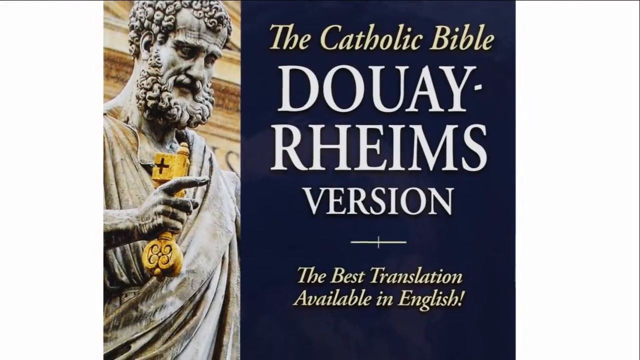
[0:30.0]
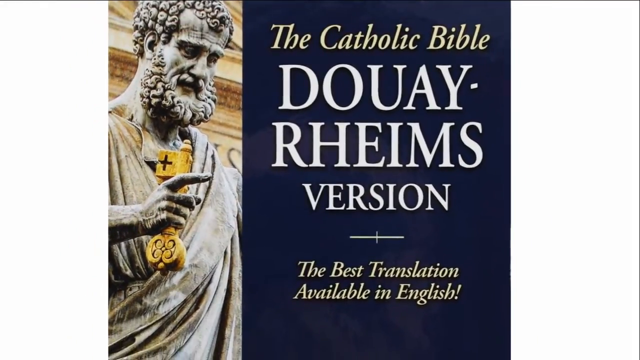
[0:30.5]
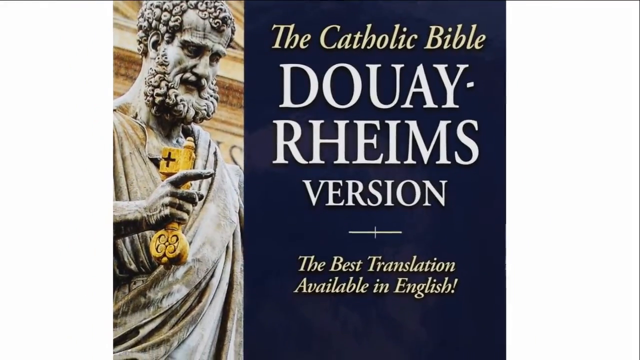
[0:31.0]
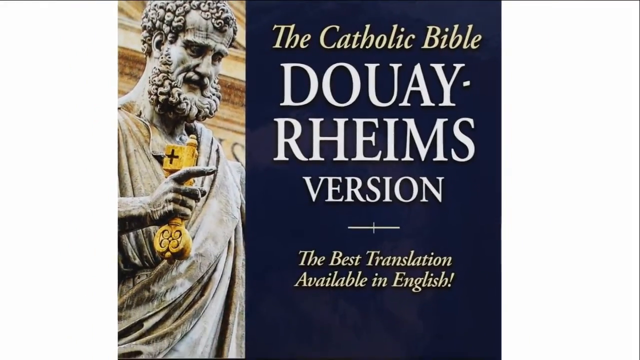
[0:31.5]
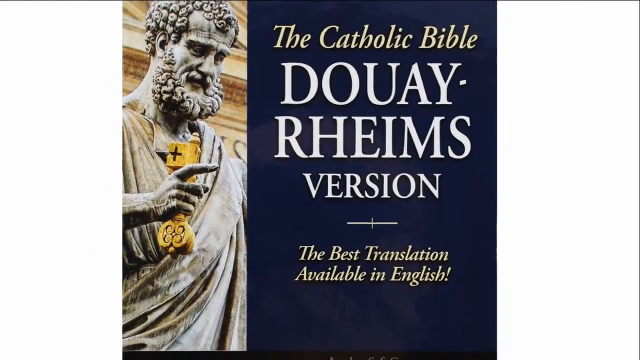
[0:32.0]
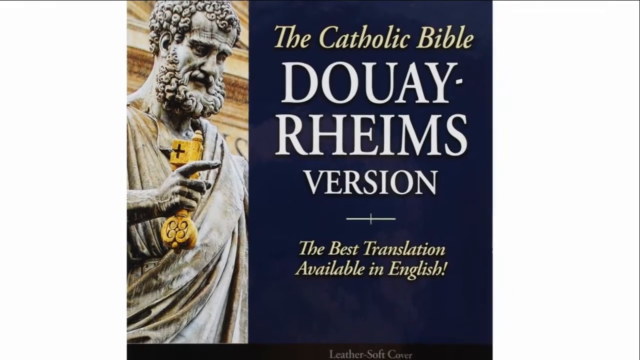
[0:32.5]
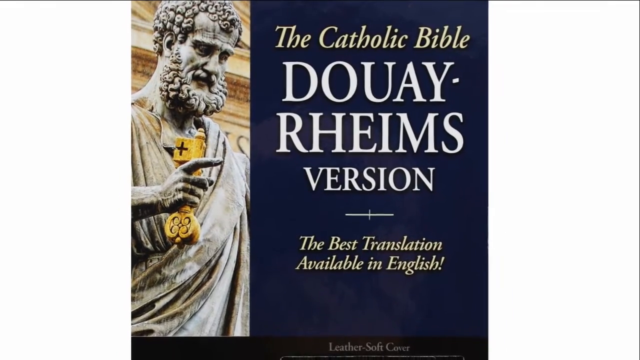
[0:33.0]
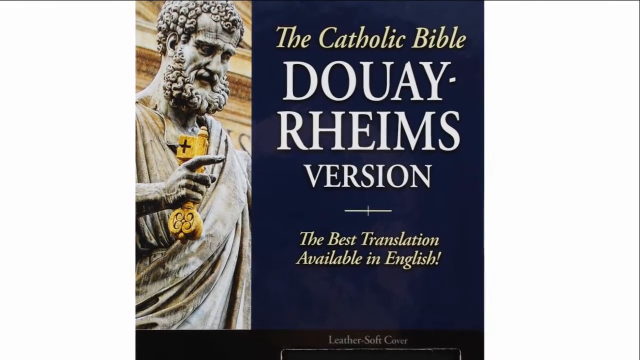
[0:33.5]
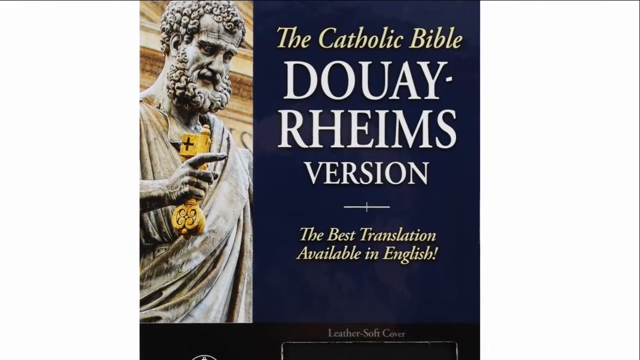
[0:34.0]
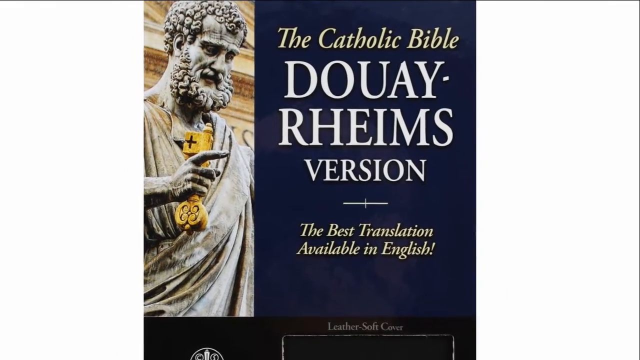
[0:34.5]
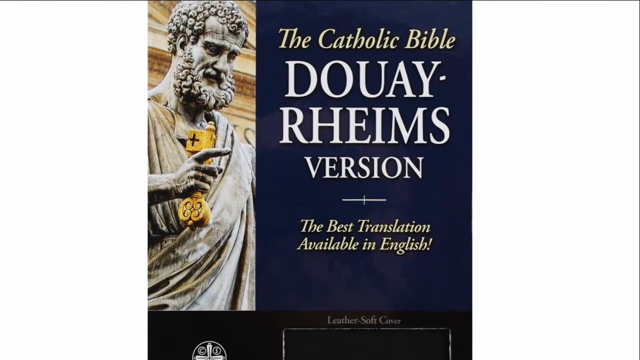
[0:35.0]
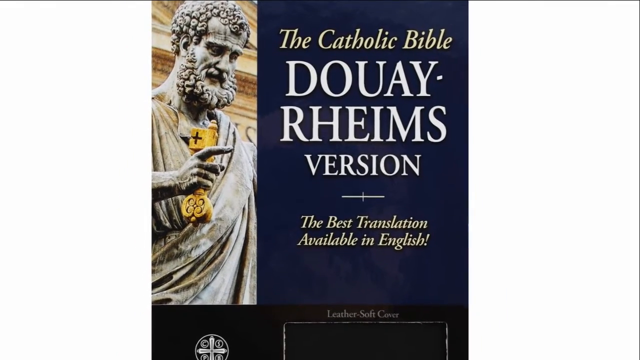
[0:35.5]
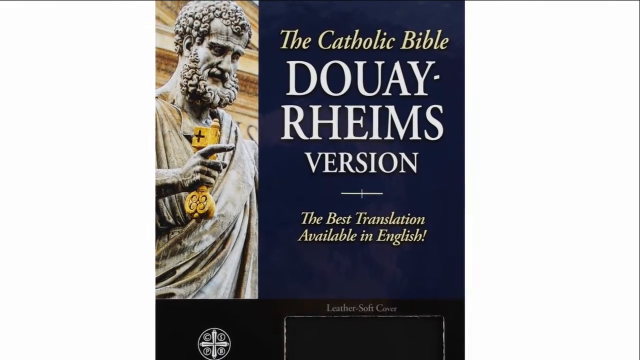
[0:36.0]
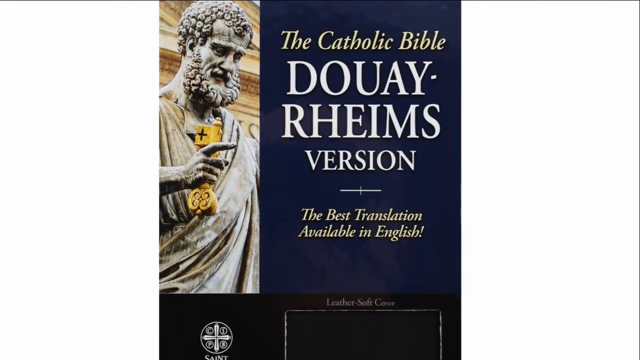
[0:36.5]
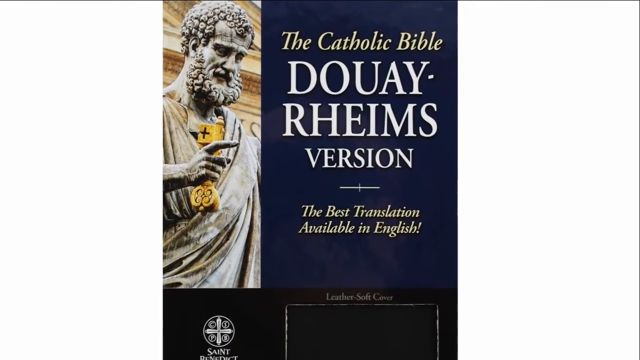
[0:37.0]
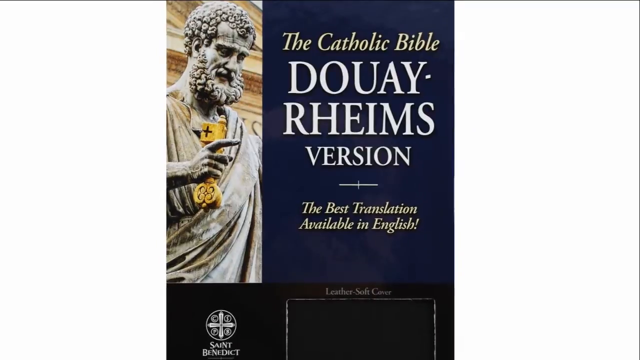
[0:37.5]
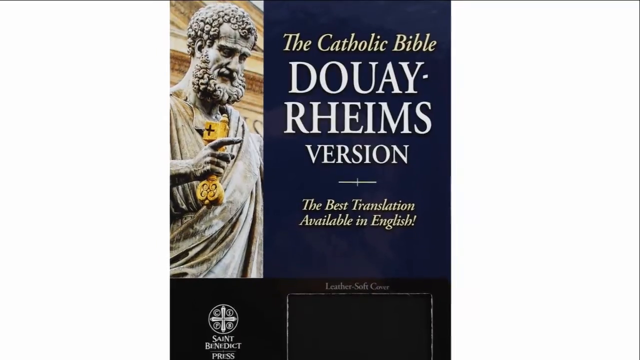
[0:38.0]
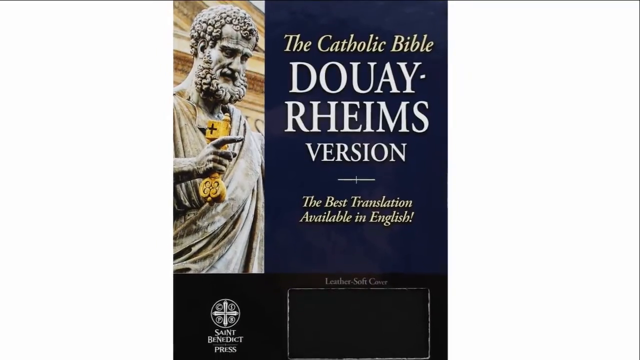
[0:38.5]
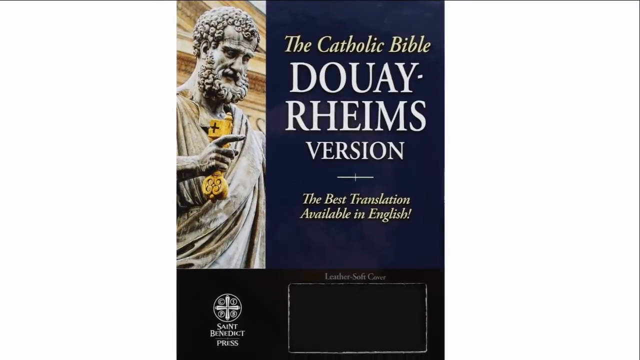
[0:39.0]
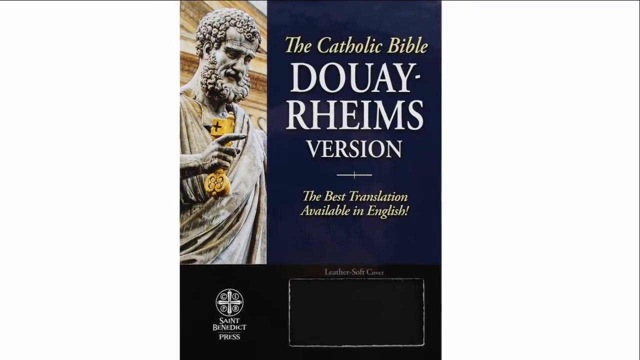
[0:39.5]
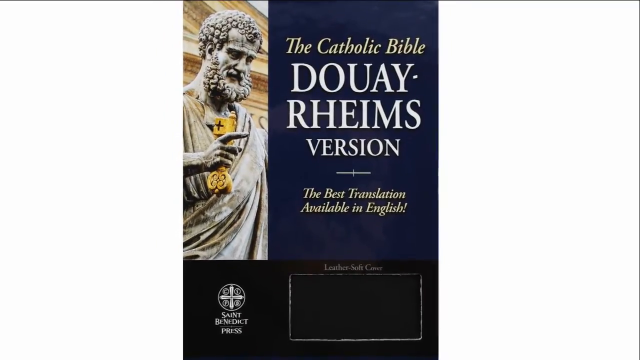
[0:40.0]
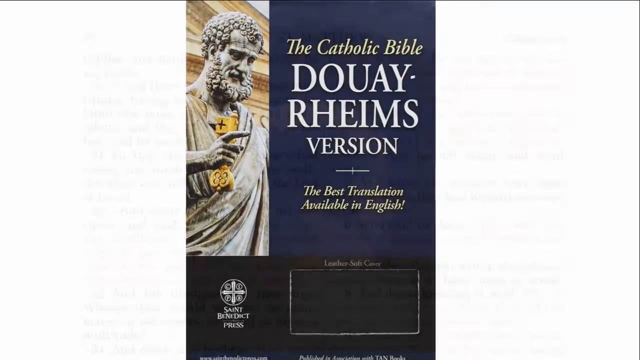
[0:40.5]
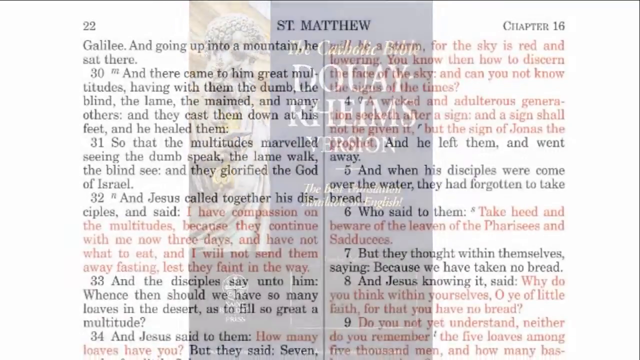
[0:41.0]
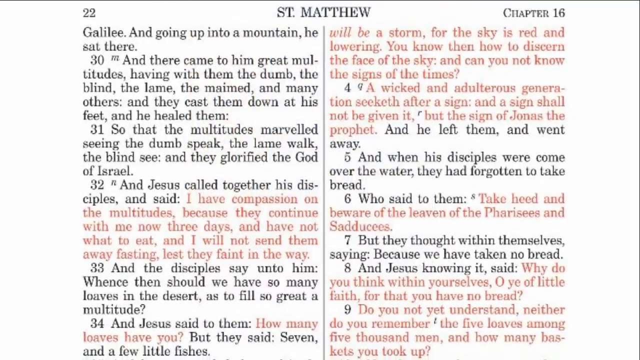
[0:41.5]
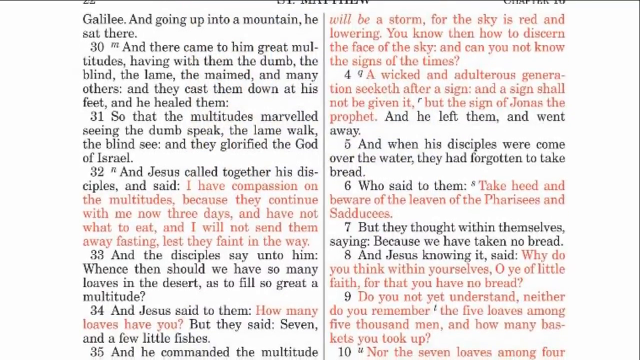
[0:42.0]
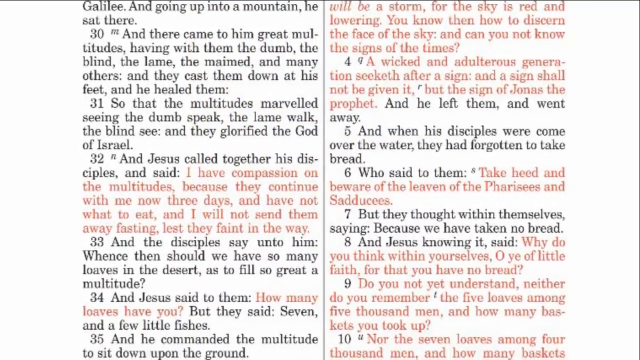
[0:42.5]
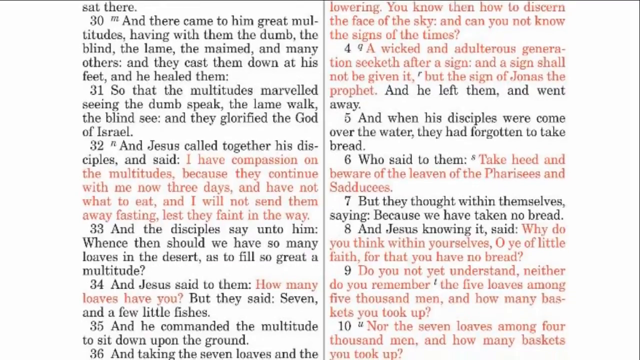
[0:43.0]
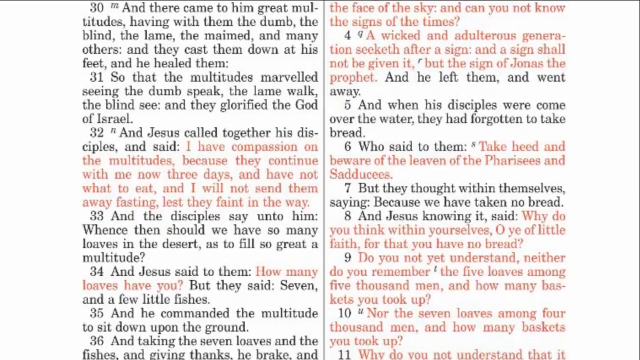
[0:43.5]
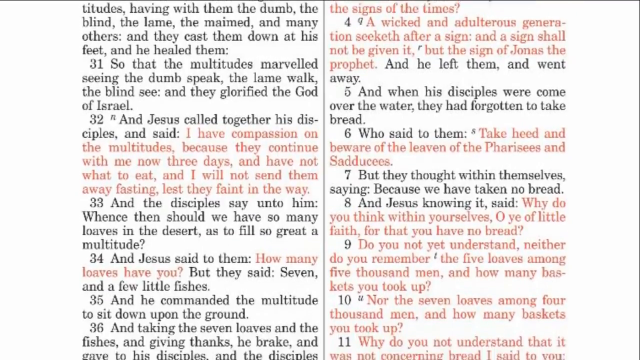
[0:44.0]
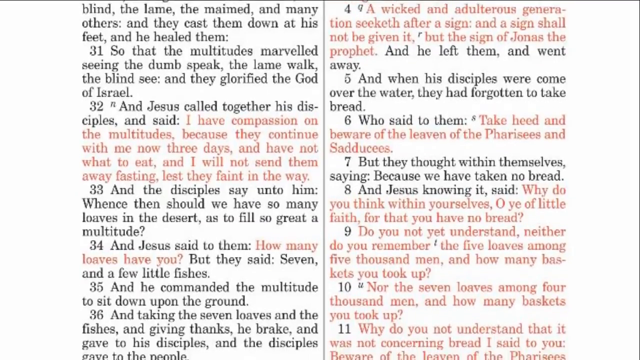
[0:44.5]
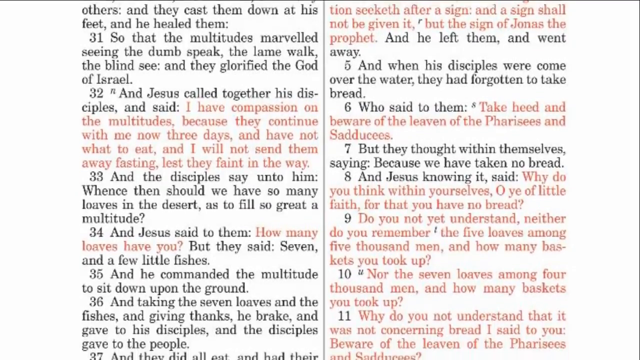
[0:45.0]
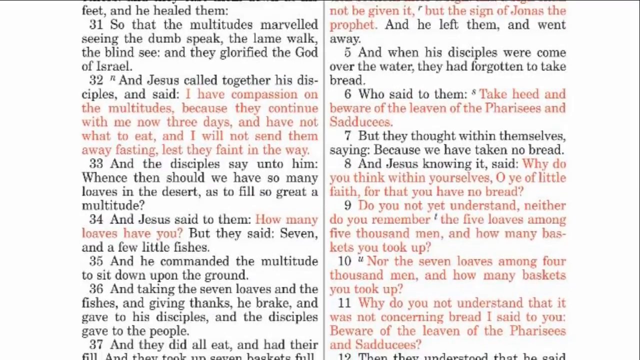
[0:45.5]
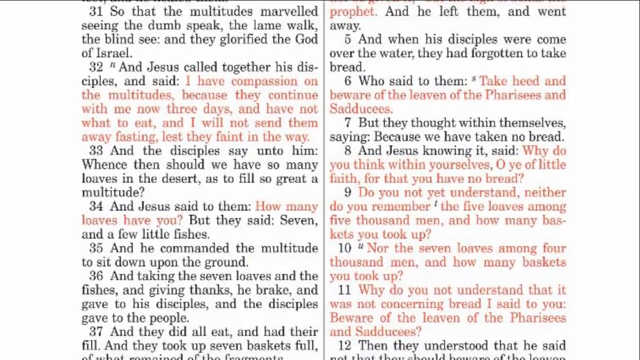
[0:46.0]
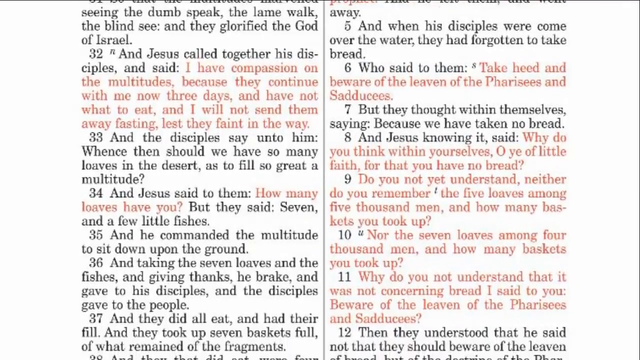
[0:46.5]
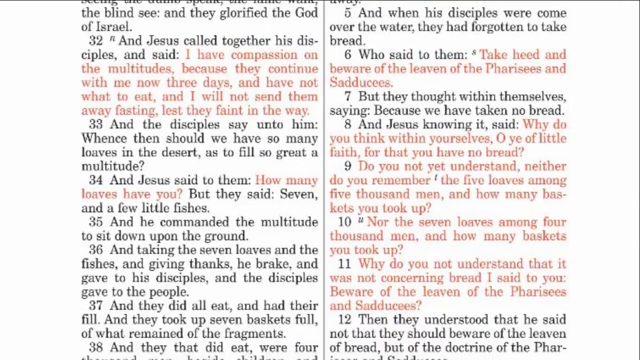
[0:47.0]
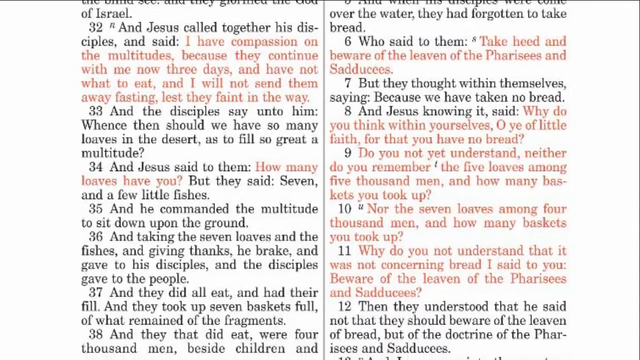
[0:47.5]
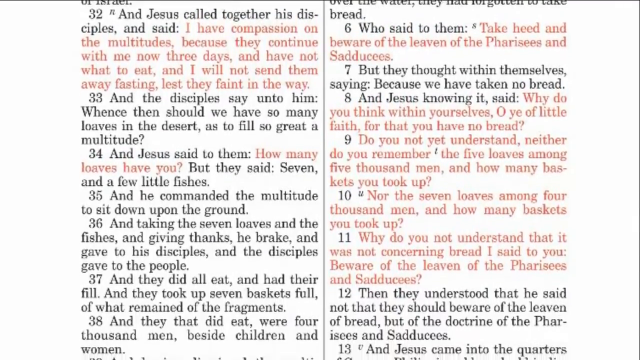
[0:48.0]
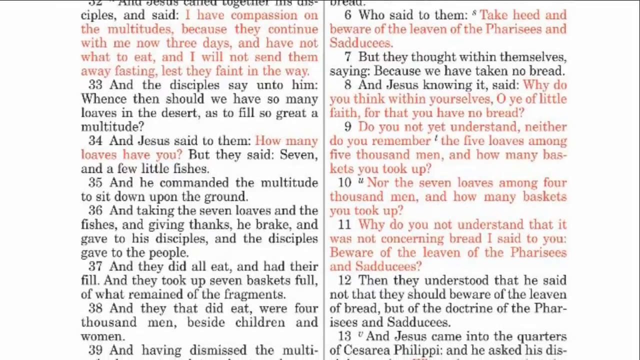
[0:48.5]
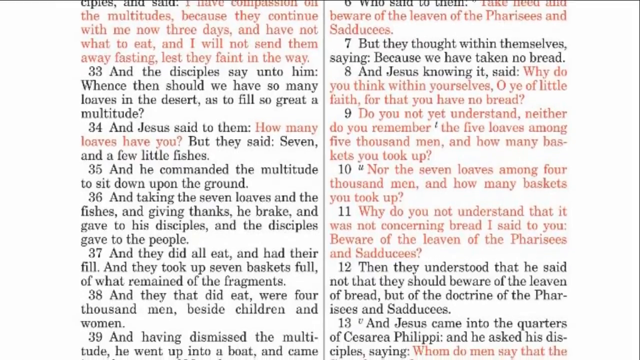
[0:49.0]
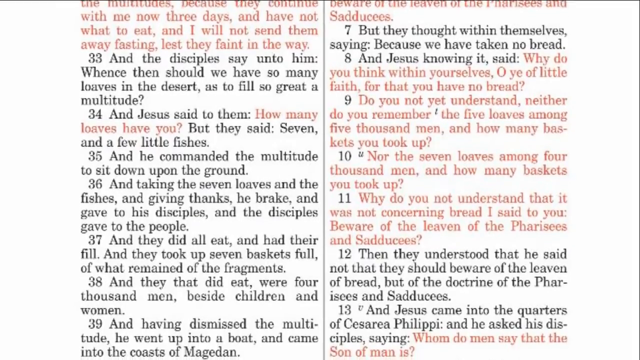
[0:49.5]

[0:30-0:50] One of the books she was holding seems to be the Holy Bible. The other book's cover is about two-thirds a very dark blue background, with "the Catholic Bible" in a very light yellow, sort of italic font, and "Douay-Rheims version" in massively large white all-caps Roman letters. Below that is a small white line, and in the same faint yellow it says "the best translation available in English!" The left third of the front cover shows a grey statue of an older man with curly hair, a curly moustache and a curly beard that is not long, going halfway down his neck. He holds a yellow key in his right hand, points forward with his index finger, and wears a cloak of some kind; the statue's material is unclear. The view slowly zooms out and then shows the inside of the Bible at St. Matthew chapter 16, with the words of Christ in red.